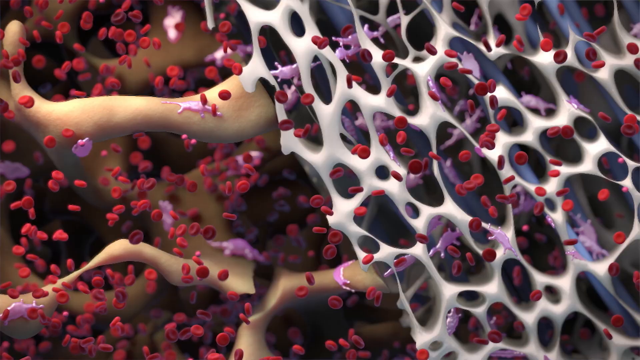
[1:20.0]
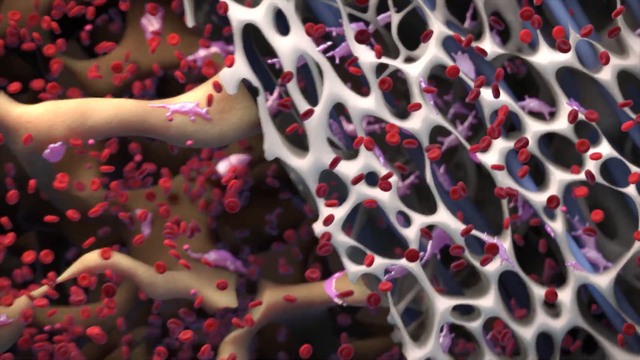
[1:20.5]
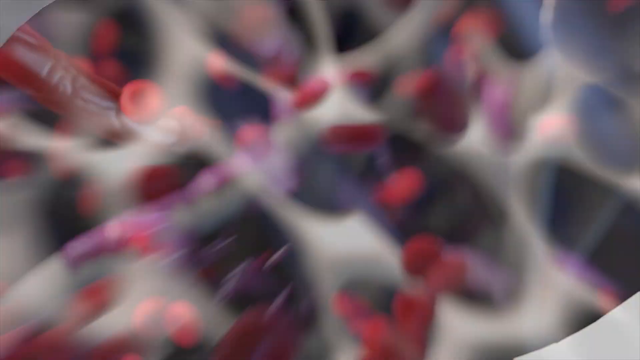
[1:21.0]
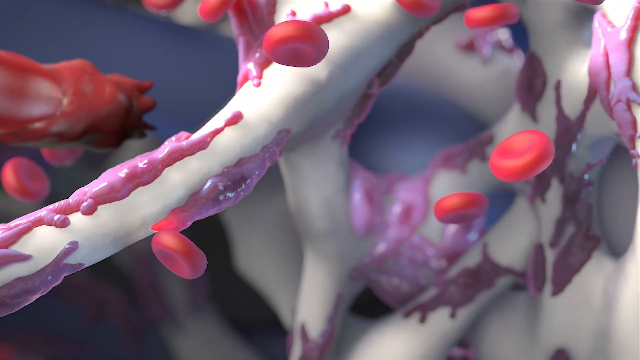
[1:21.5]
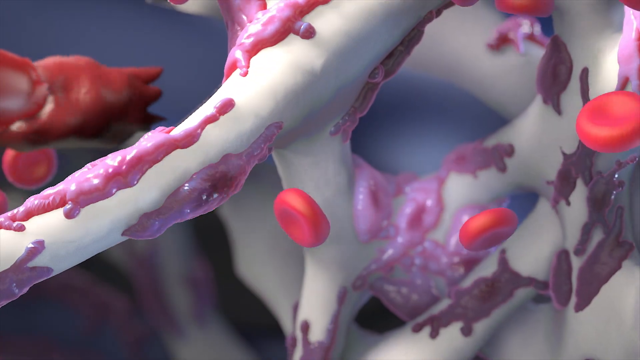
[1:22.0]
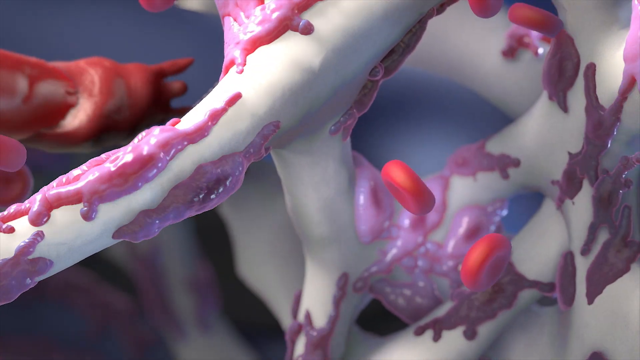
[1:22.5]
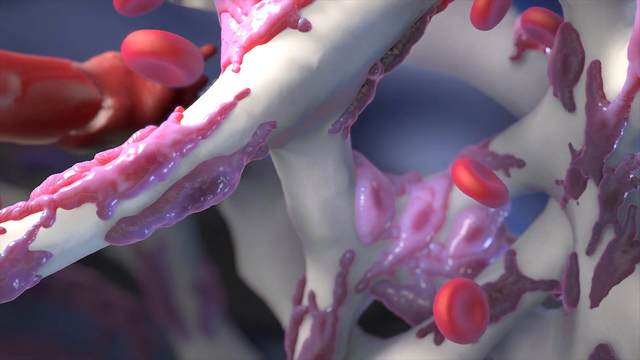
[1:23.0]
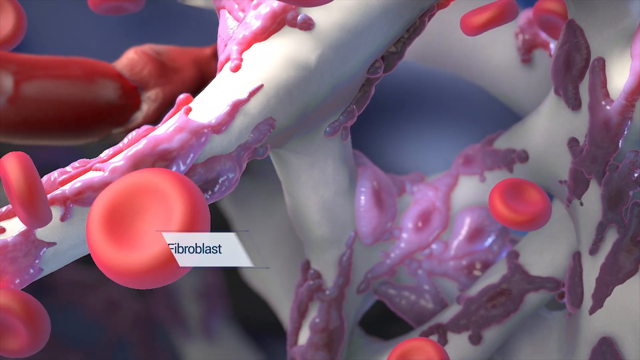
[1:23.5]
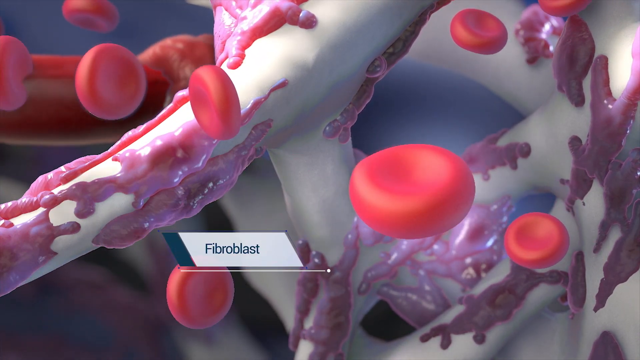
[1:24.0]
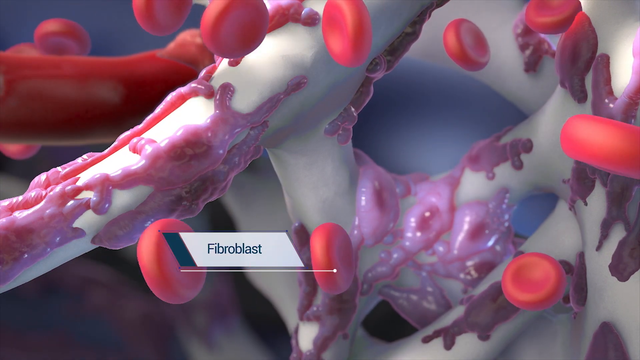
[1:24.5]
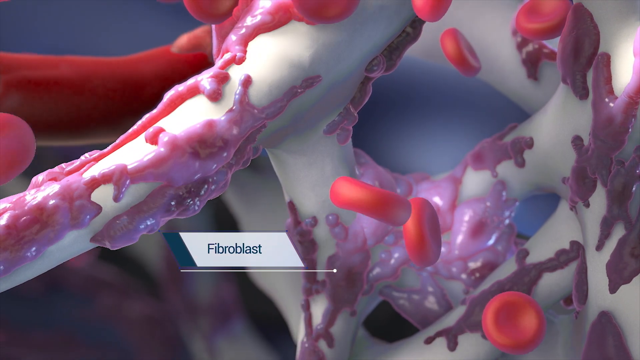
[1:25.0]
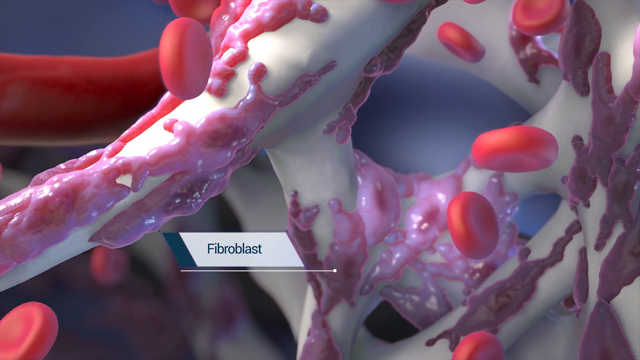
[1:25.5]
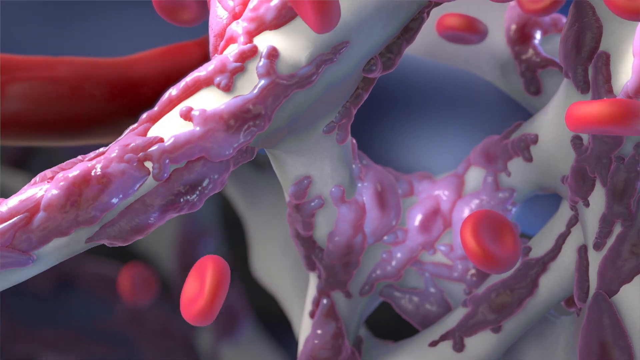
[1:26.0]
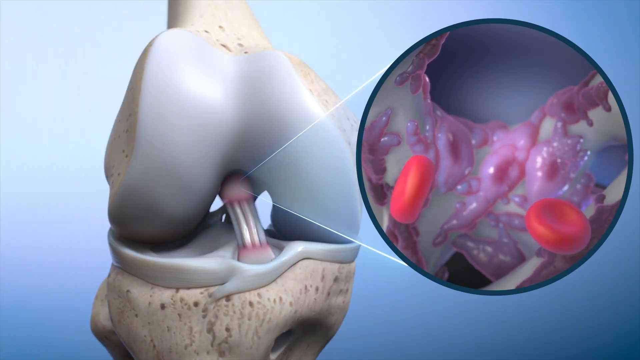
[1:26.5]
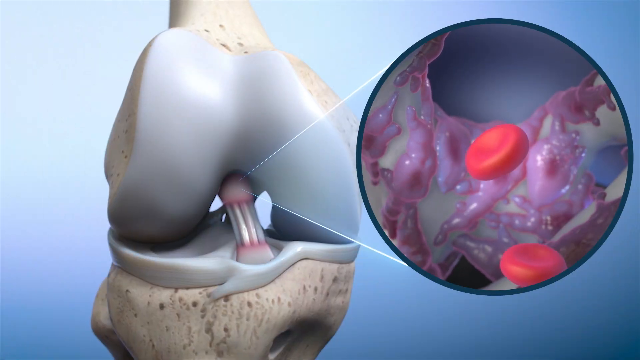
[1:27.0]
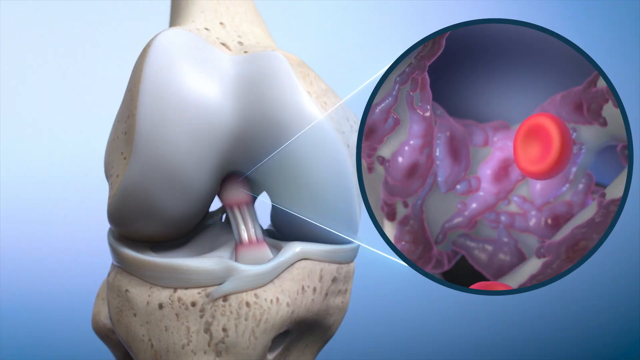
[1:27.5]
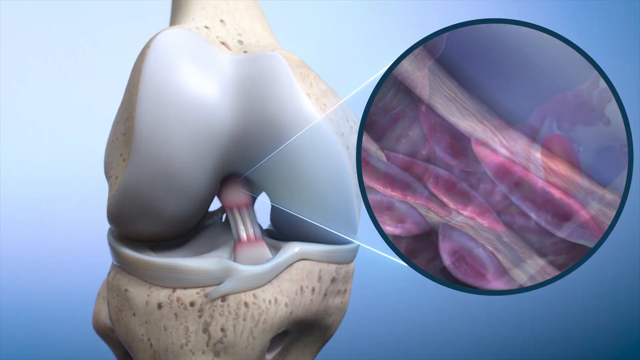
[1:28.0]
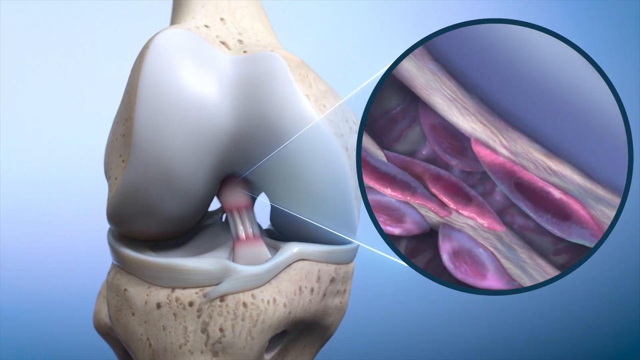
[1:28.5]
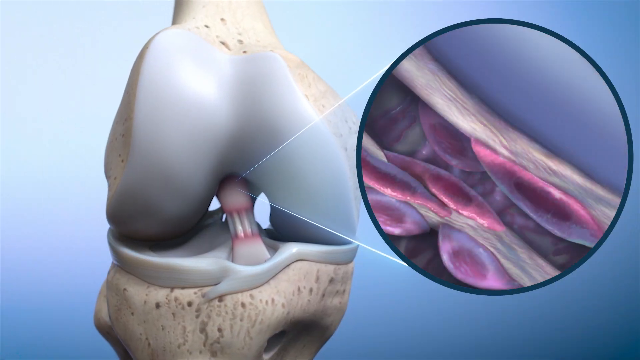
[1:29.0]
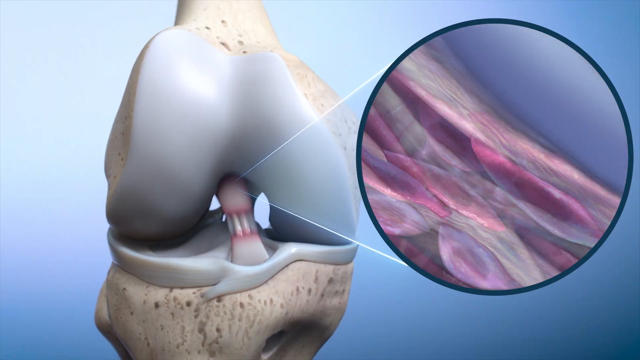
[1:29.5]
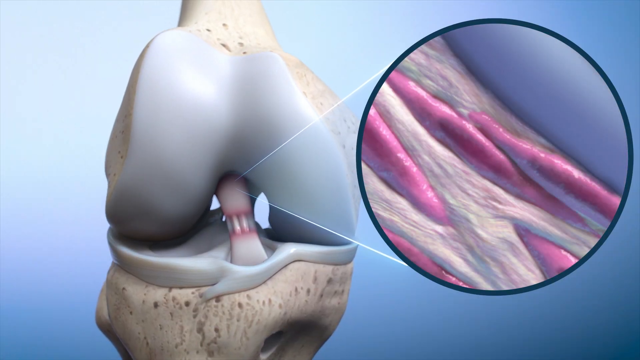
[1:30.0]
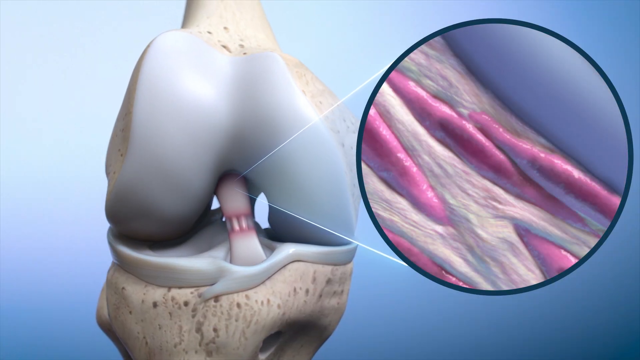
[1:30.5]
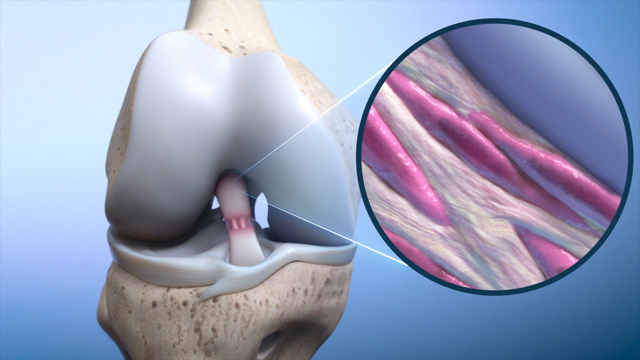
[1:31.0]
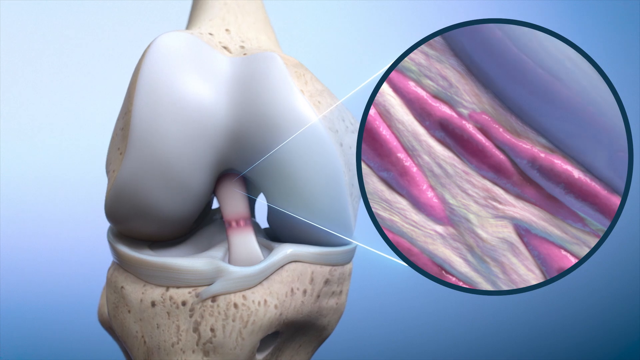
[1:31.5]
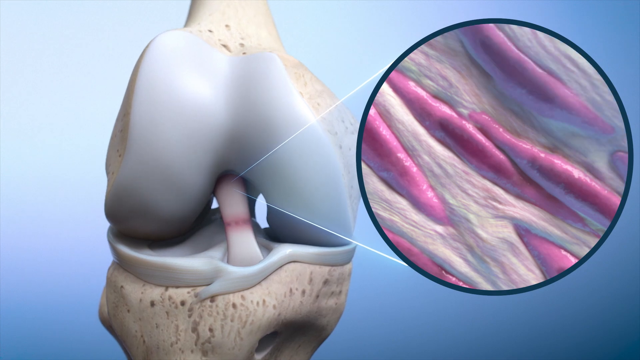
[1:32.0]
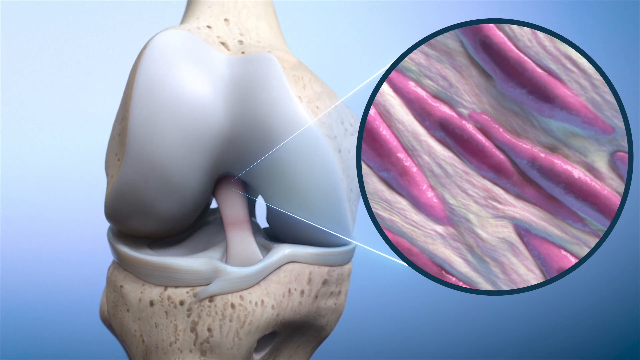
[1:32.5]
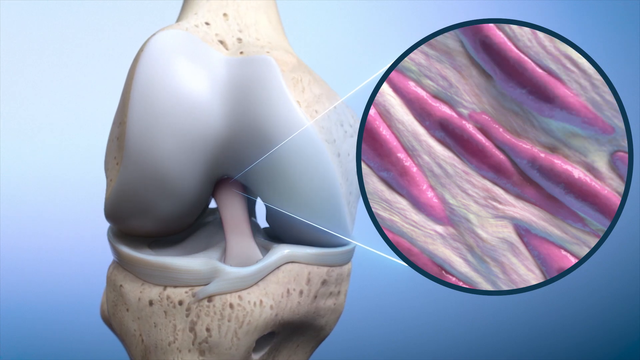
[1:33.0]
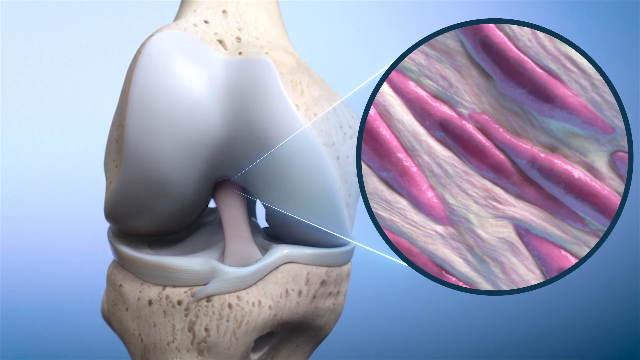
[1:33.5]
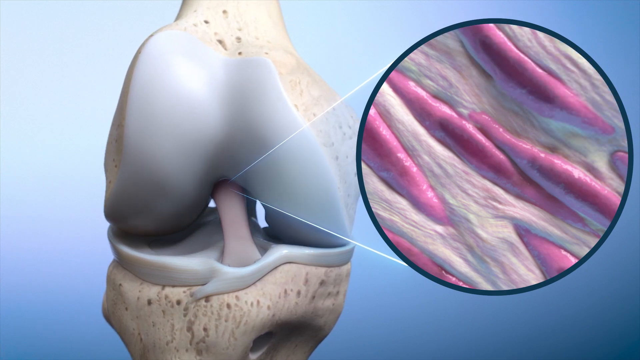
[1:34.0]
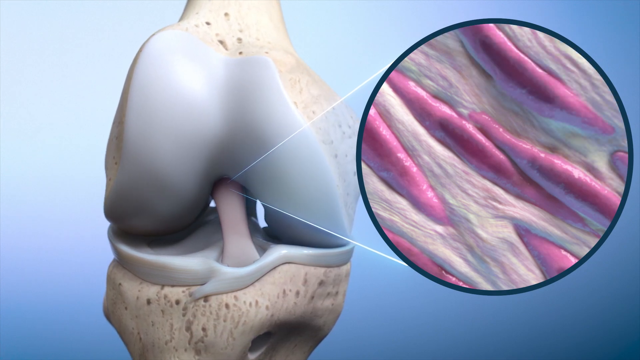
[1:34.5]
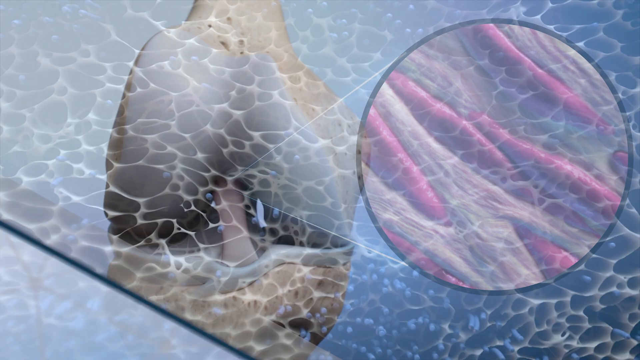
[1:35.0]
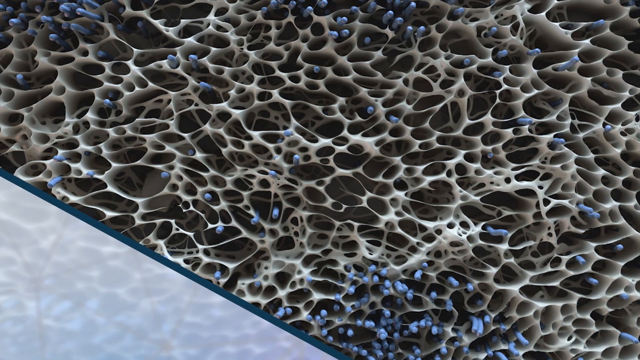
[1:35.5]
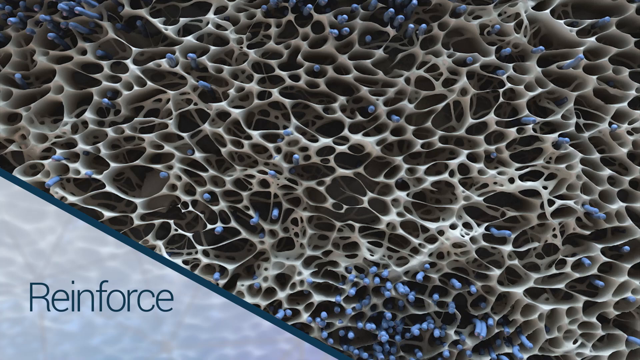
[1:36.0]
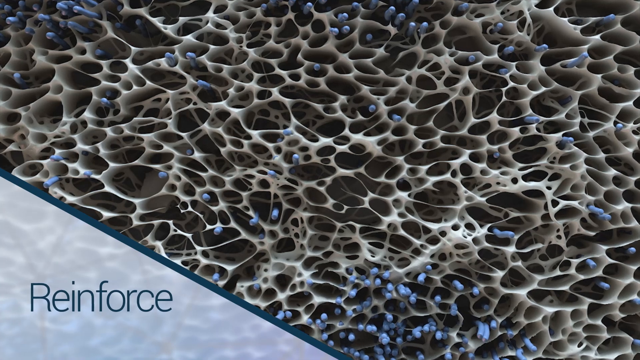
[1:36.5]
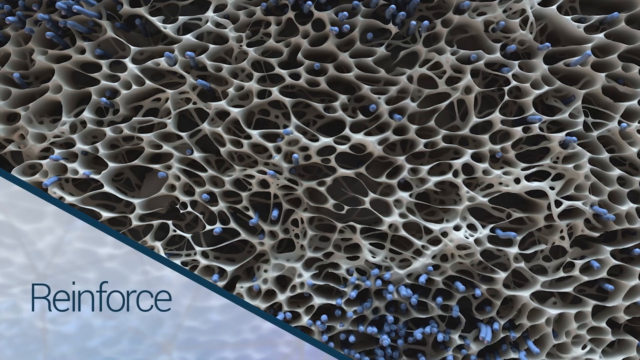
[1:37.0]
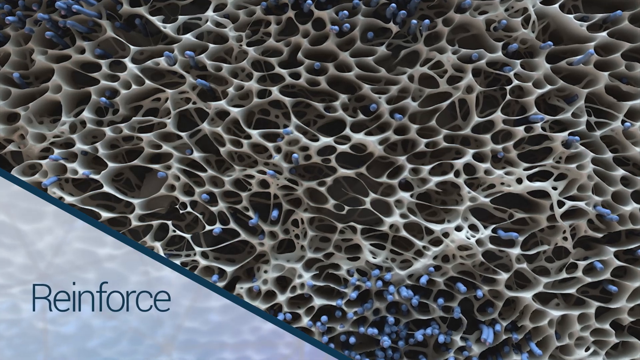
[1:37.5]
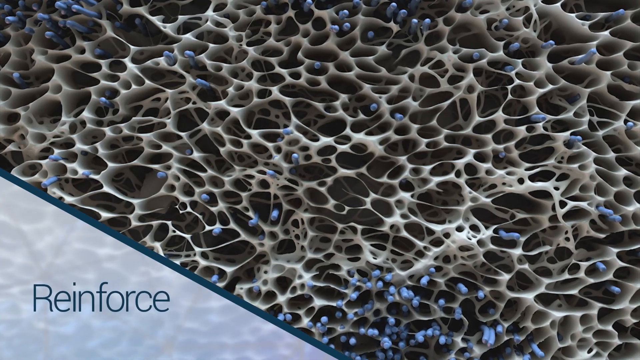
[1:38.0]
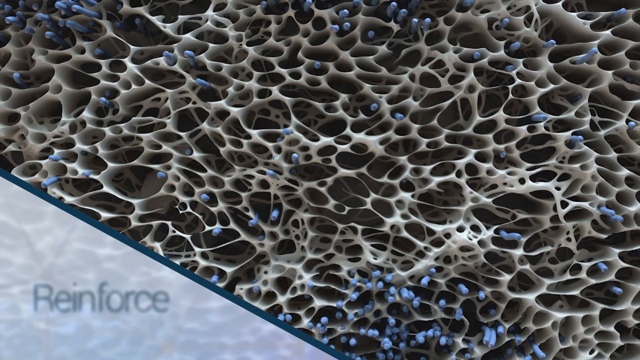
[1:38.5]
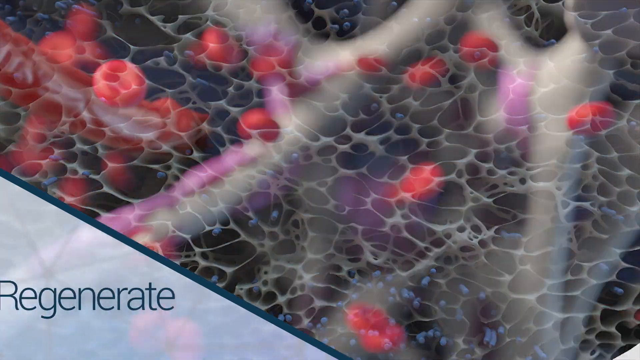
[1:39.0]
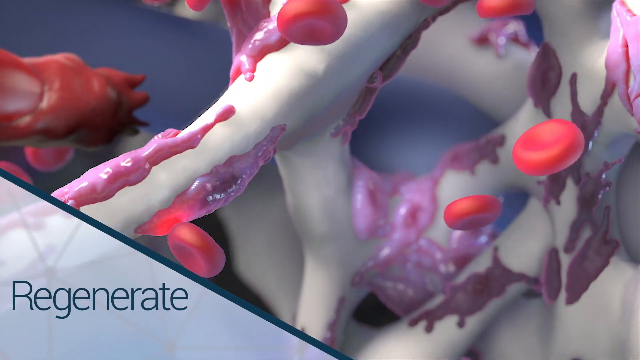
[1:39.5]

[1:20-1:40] The animation continues, and the view zooms very far in on the white matrix, with red things floating around. They look like red disks, possibly meant to be red blood cells, and some purple stuff clings to the white matrix. A legend reads "fibroblast". Then a zoomed-out view of the bone appears, with the close-up in a circle on the right and a triangle connecting the close-up to a spot on the bone. In the close-up, the close-up animation is visible, and then a different view with white tubular objects and purple objects. The close-up then switches to another scene of white and purple, where the purple kind of looks like worms. A new scene follows, with "reinforce" in the lower left and the matrix in the upper left, and then "regenerate" appears with the close-up.